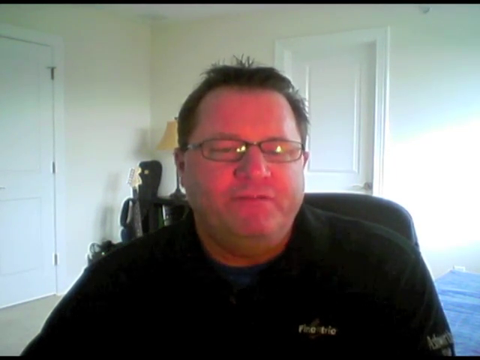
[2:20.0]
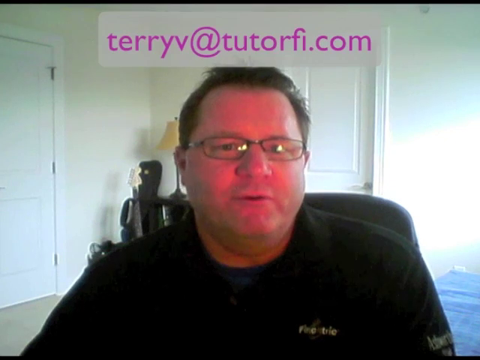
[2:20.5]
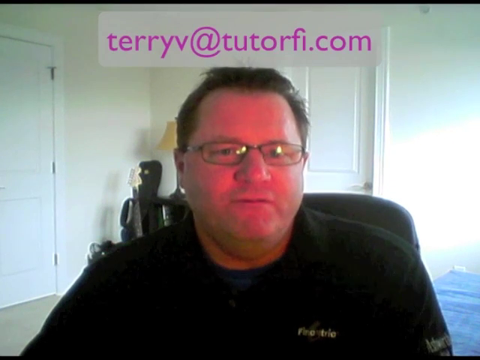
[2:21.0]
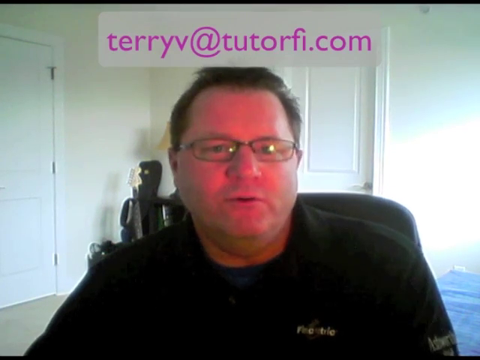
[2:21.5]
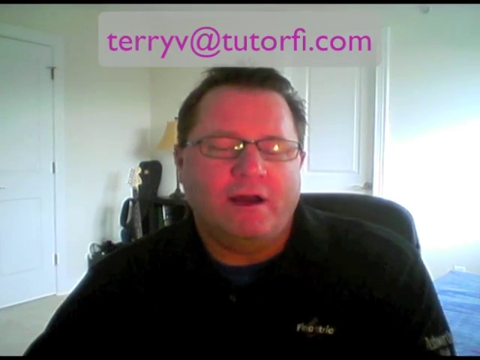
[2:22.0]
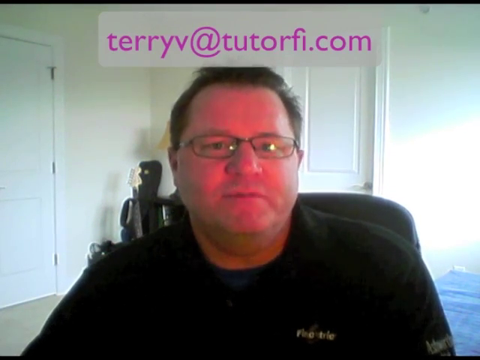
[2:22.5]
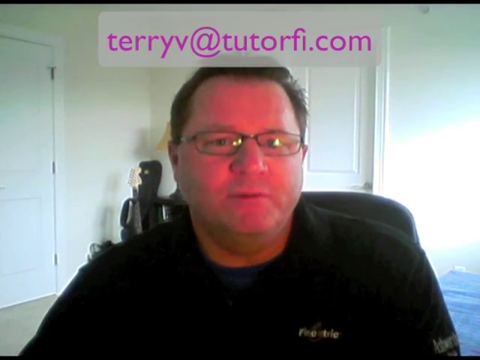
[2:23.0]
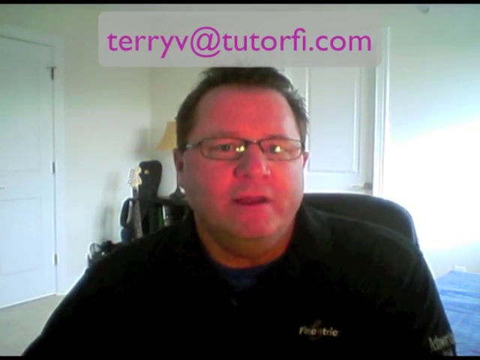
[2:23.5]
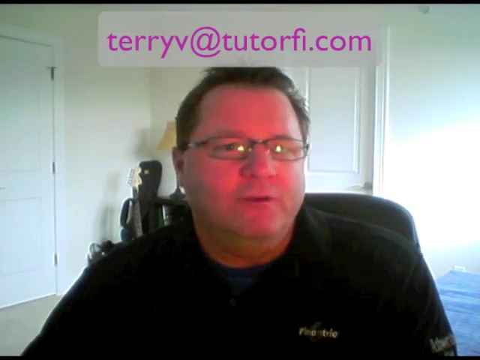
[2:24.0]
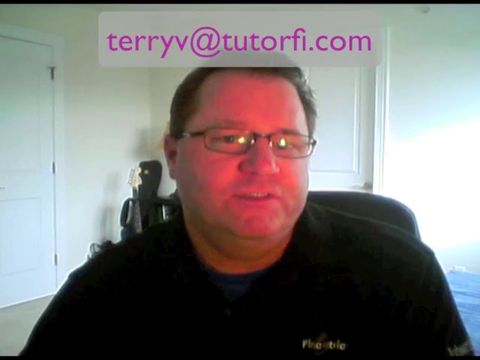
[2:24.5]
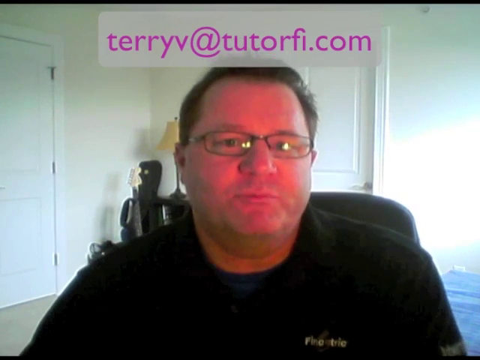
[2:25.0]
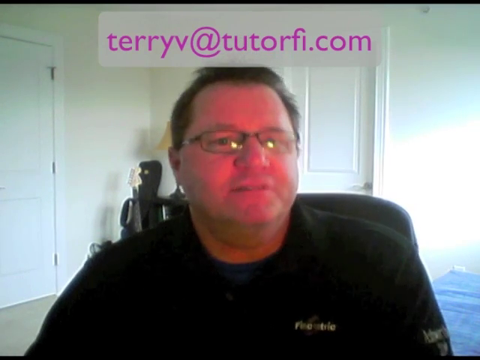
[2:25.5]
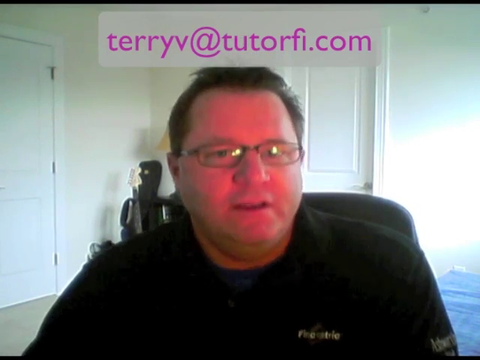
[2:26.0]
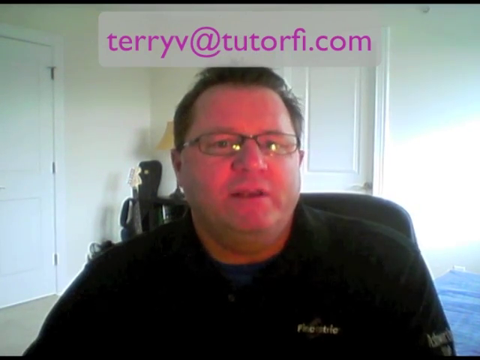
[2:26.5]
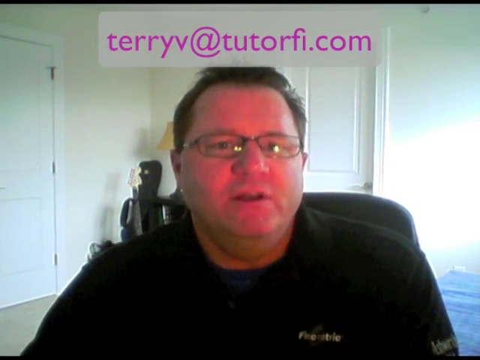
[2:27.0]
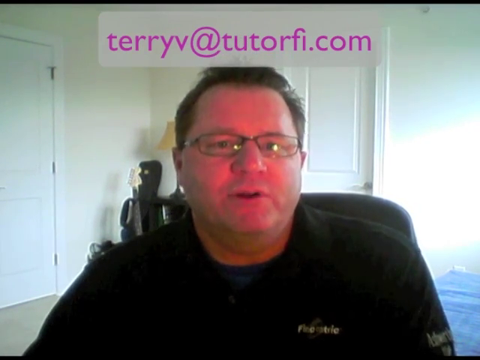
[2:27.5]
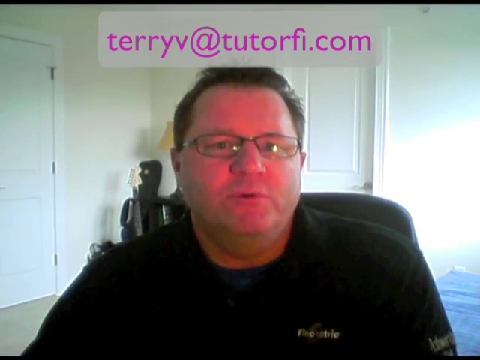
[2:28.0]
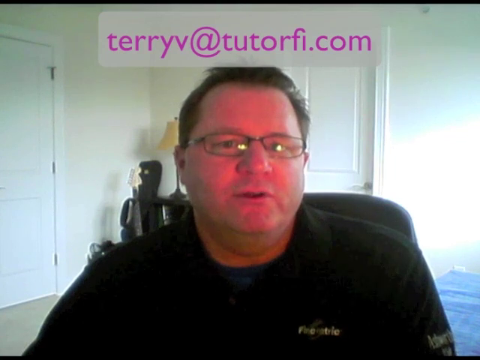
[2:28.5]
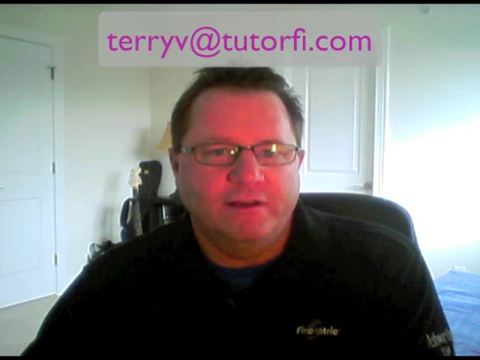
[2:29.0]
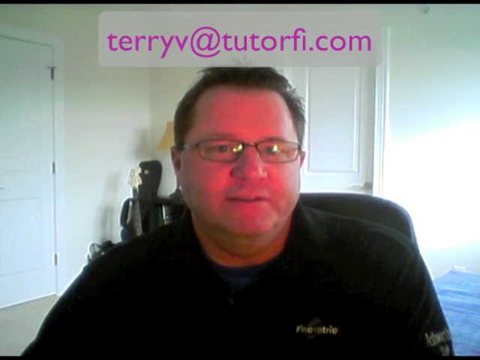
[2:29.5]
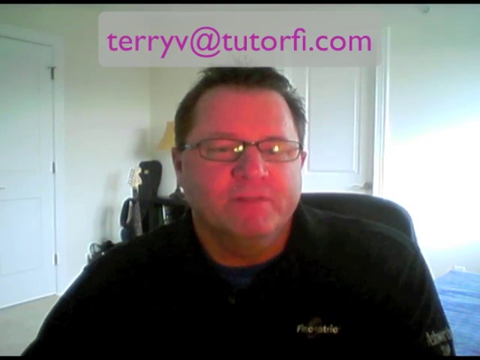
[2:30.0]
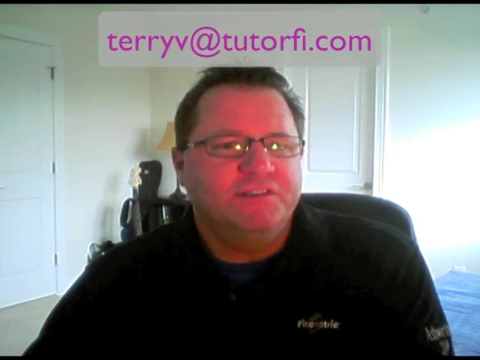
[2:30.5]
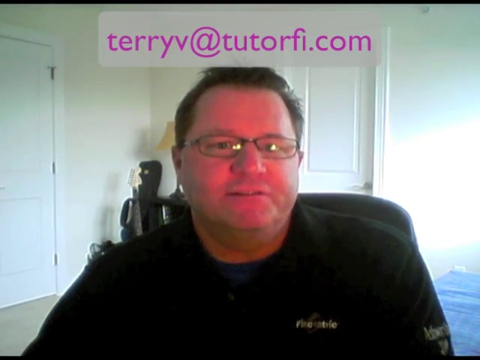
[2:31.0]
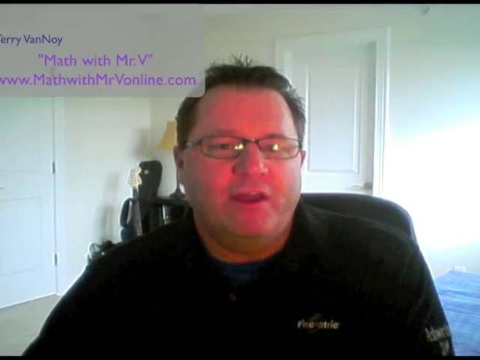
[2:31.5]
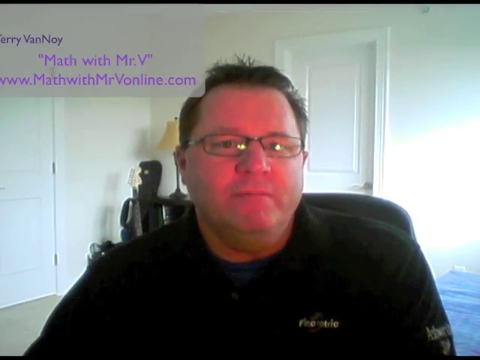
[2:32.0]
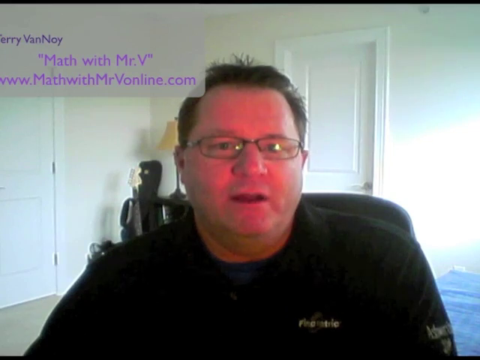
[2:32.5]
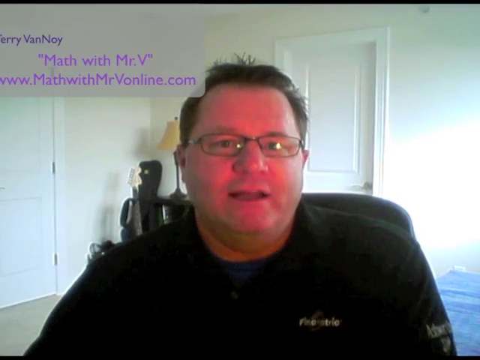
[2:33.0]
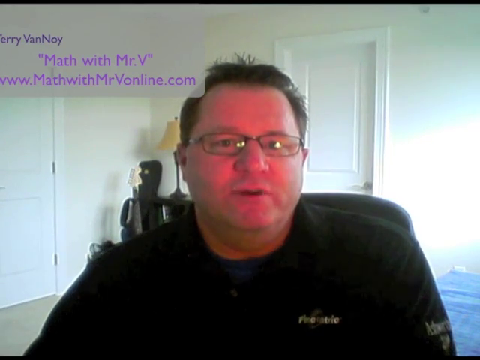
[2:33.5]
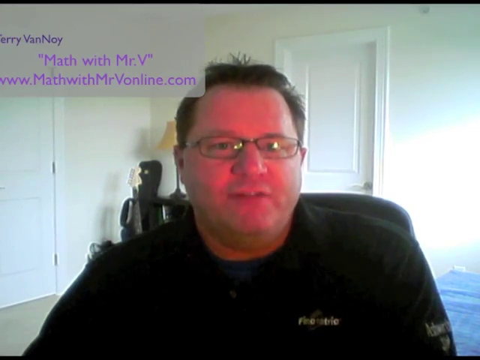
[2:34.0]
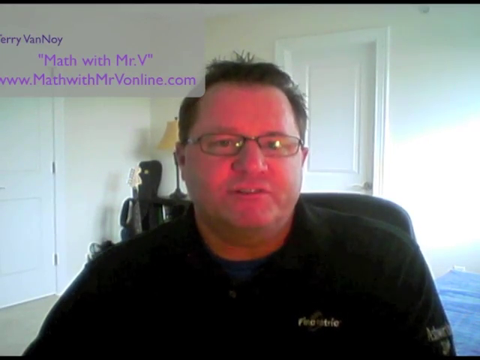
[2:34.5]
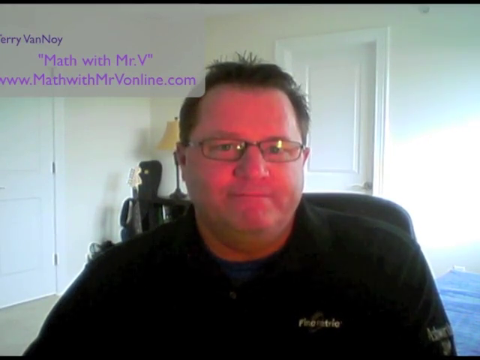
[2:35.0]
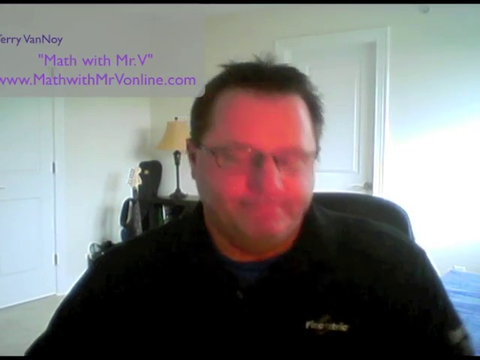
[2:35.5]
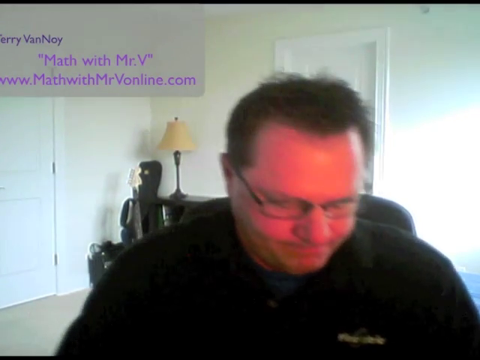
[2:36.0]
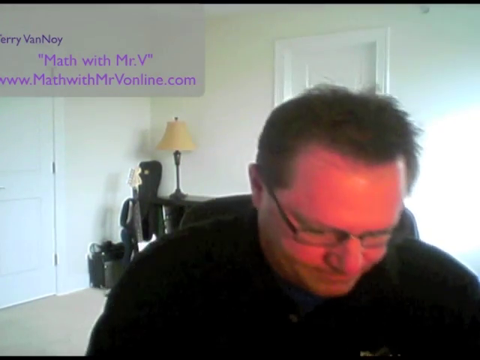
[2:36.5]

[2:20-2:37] The author of the video sits in a white room, wearing a black button-up shirt with a little writing on the left breast area. Behind him there is one door on one wall and another door on the other wall, a small table in the corner with a lamp on it, a guitar leaned up against the guitar box, and what looks to be a mattress on the floor. He talks with his head bobbing around and his shoulders moving a little. An email address pops up at the top. His name is then shown, Terry McNoy, along with "math with Mr. V www.mathwithmrvonline.com".